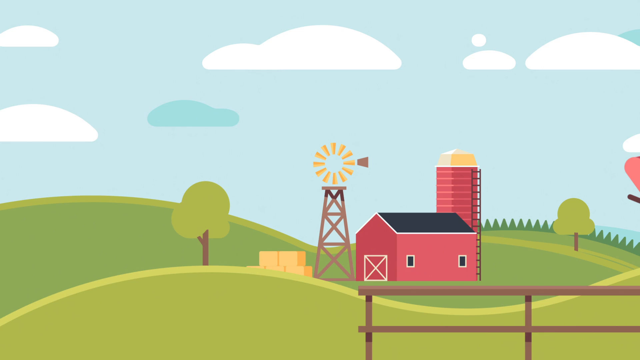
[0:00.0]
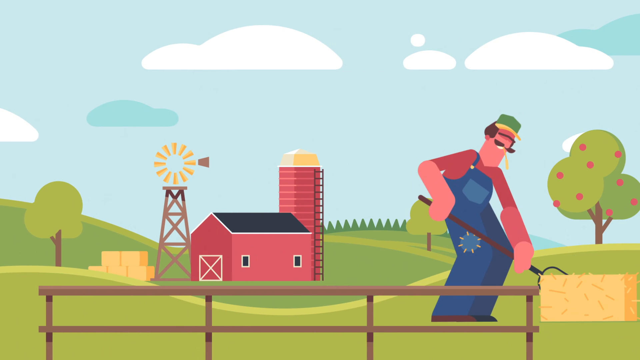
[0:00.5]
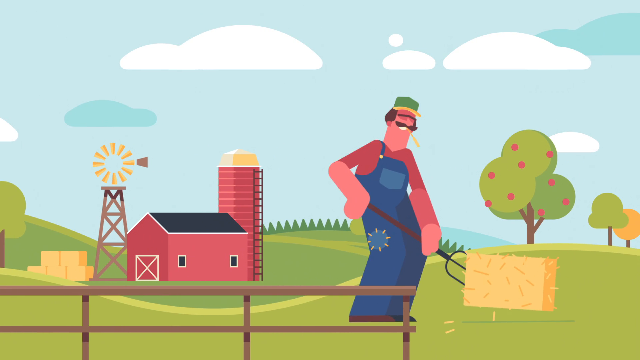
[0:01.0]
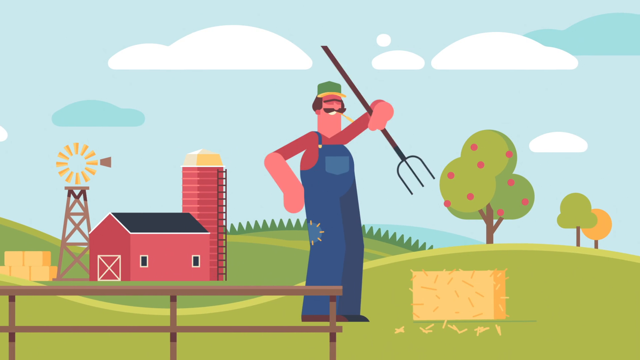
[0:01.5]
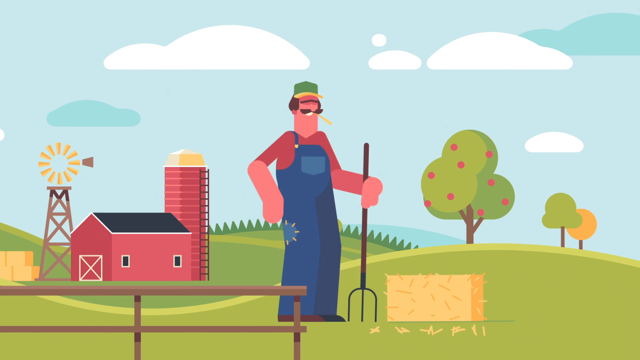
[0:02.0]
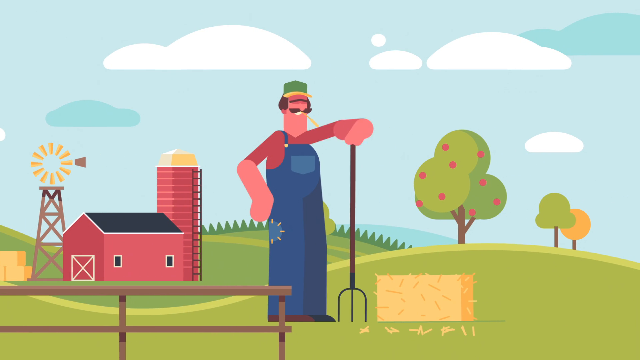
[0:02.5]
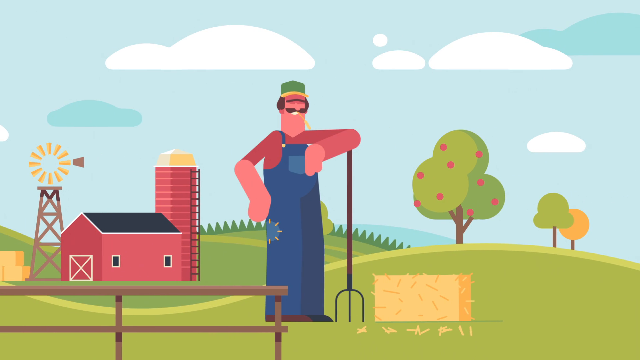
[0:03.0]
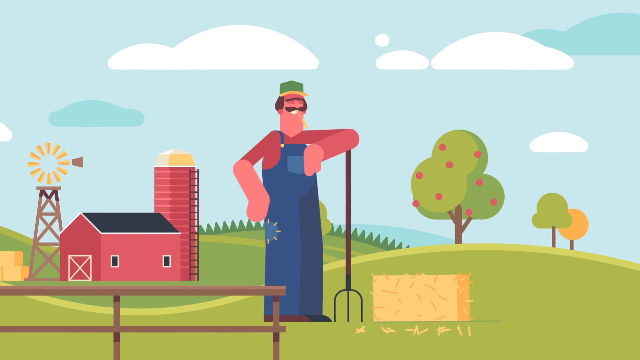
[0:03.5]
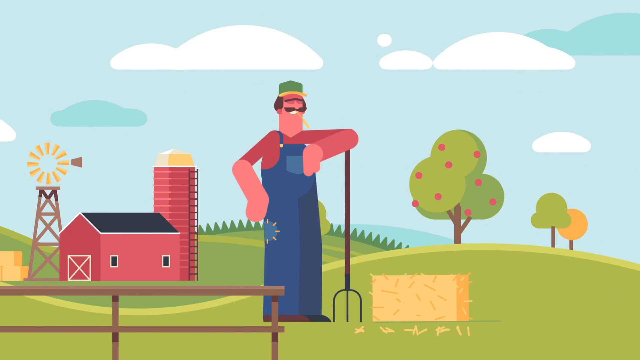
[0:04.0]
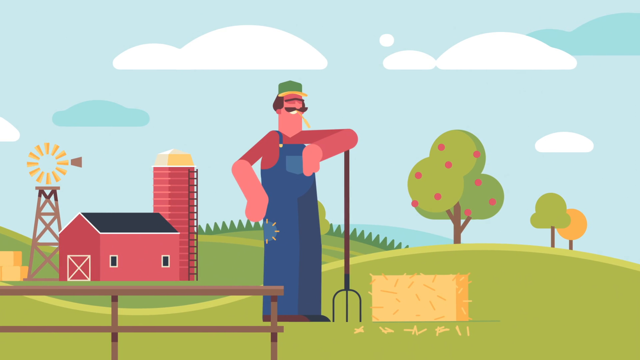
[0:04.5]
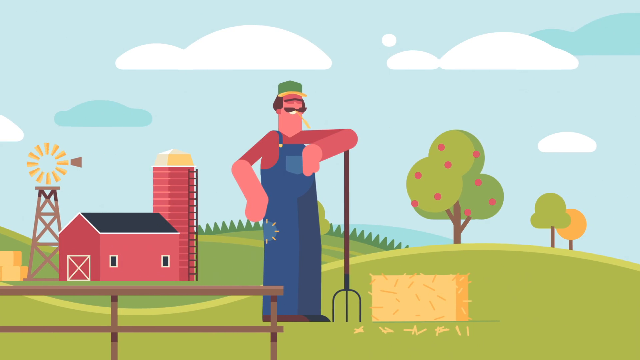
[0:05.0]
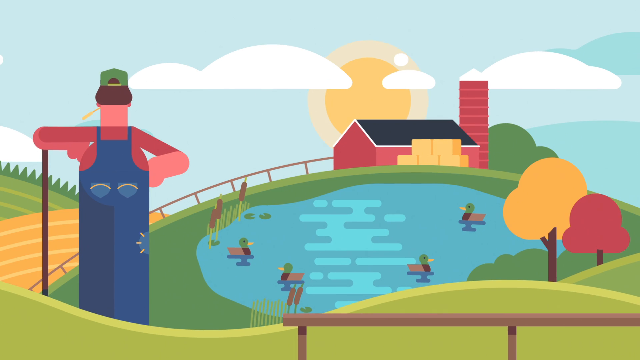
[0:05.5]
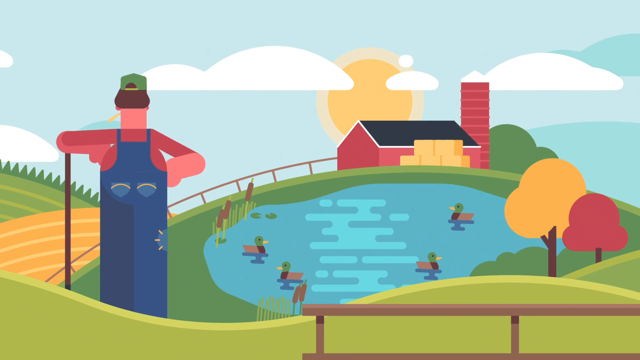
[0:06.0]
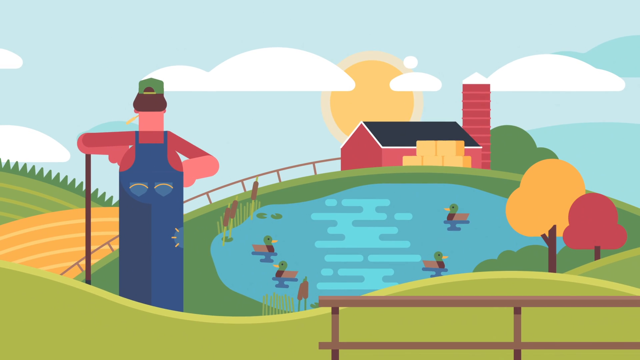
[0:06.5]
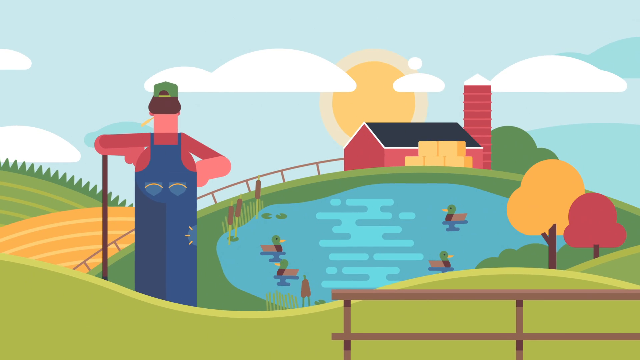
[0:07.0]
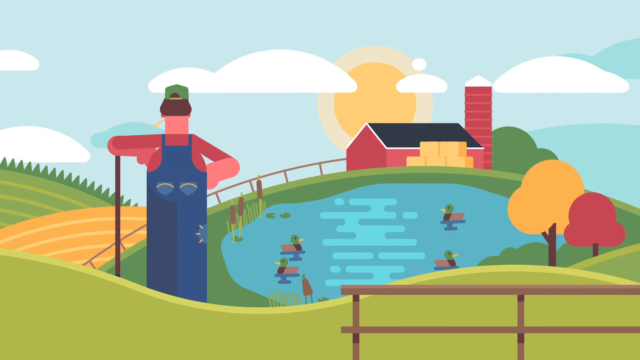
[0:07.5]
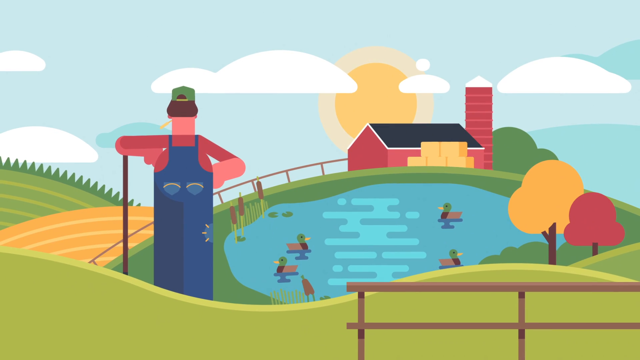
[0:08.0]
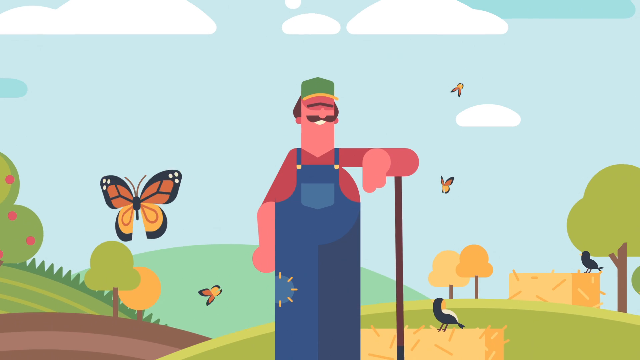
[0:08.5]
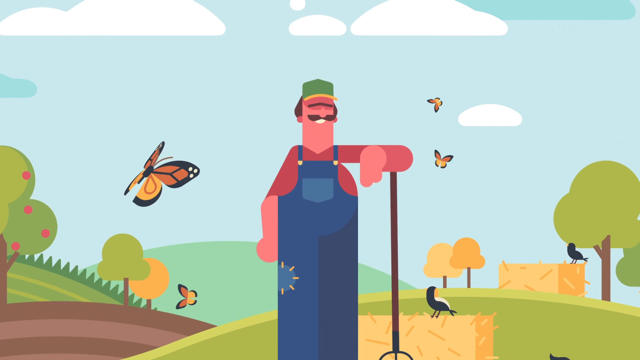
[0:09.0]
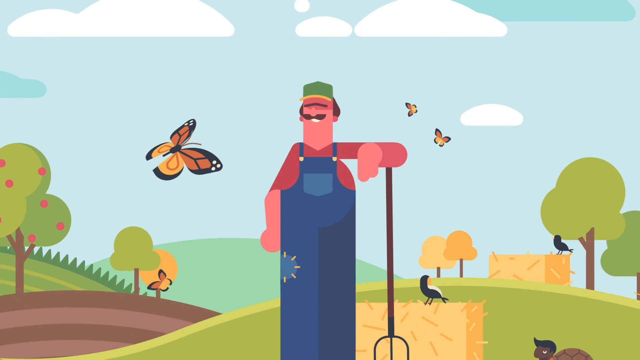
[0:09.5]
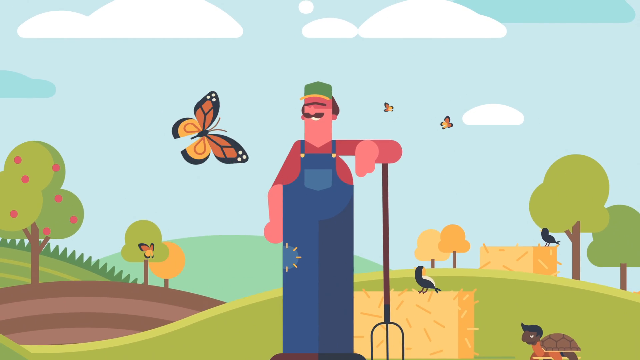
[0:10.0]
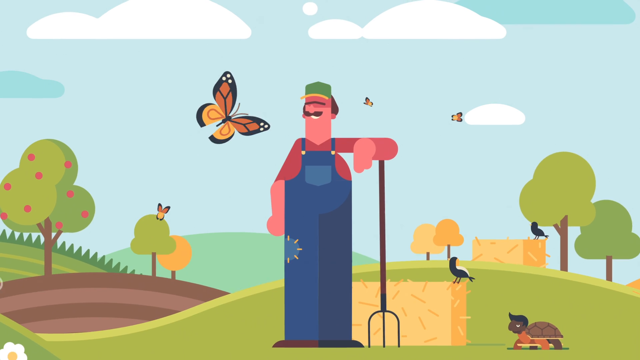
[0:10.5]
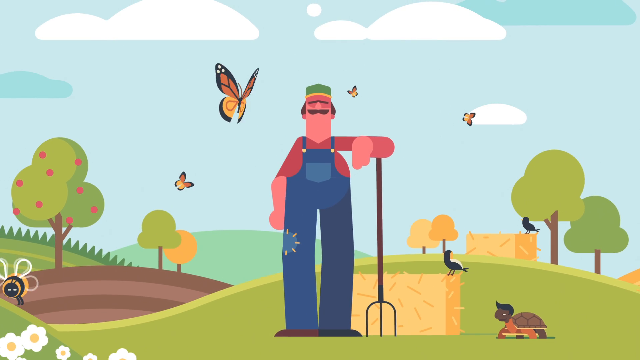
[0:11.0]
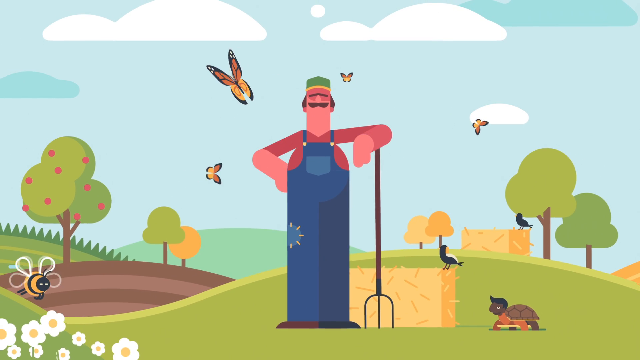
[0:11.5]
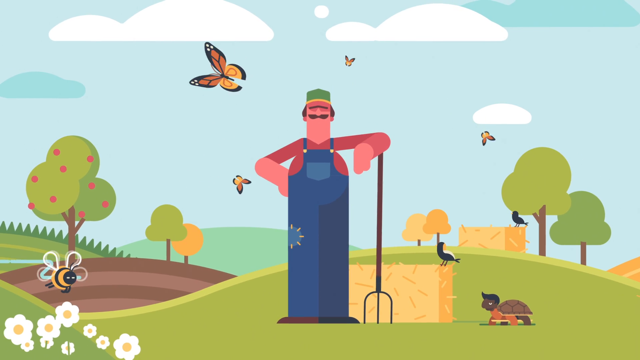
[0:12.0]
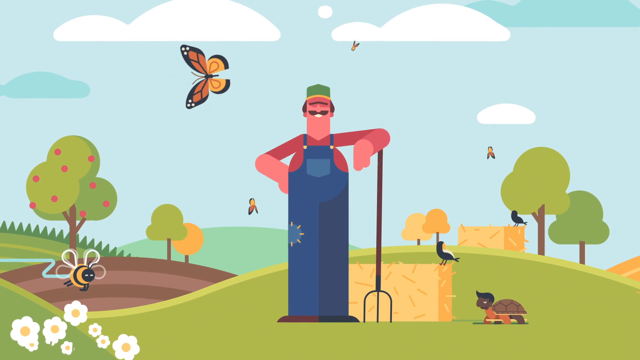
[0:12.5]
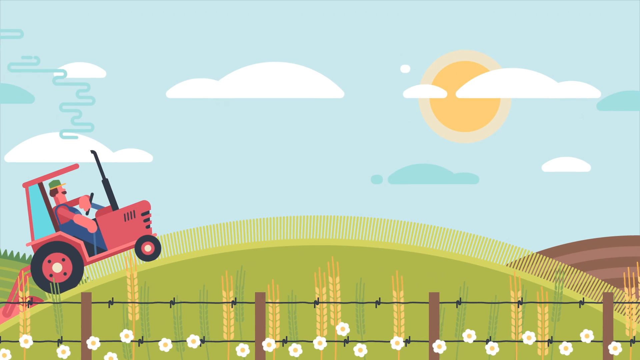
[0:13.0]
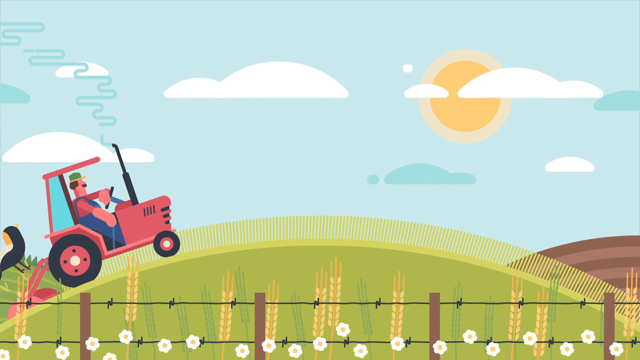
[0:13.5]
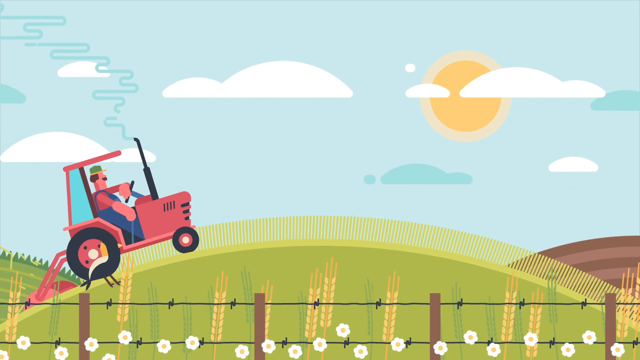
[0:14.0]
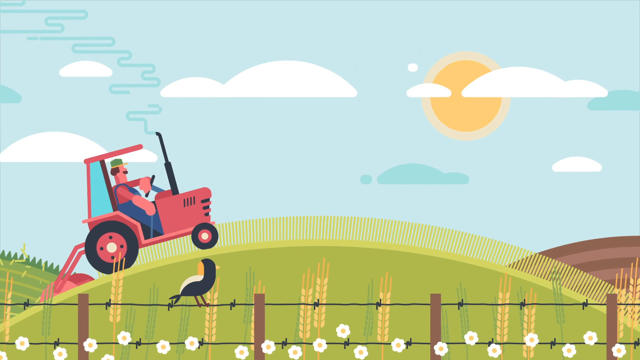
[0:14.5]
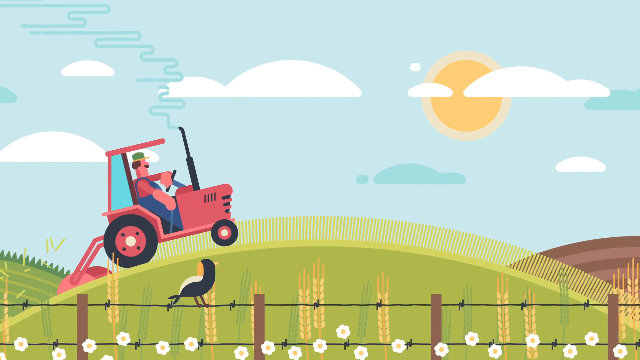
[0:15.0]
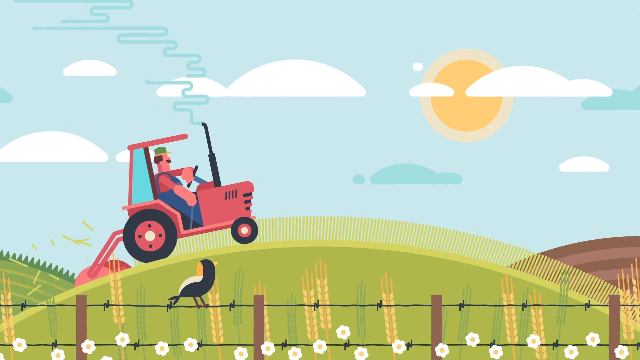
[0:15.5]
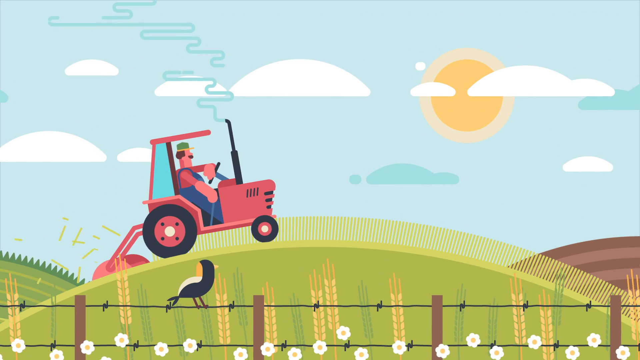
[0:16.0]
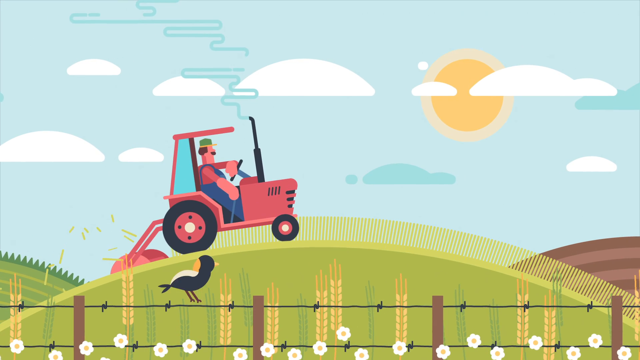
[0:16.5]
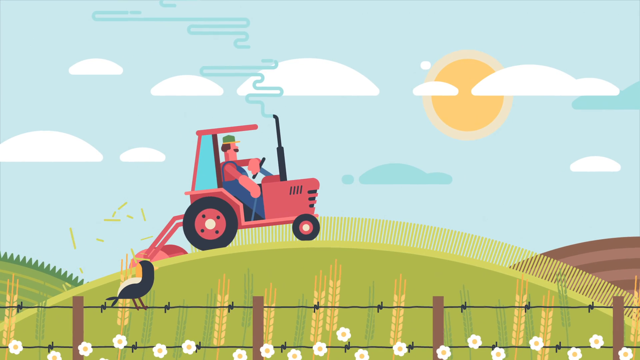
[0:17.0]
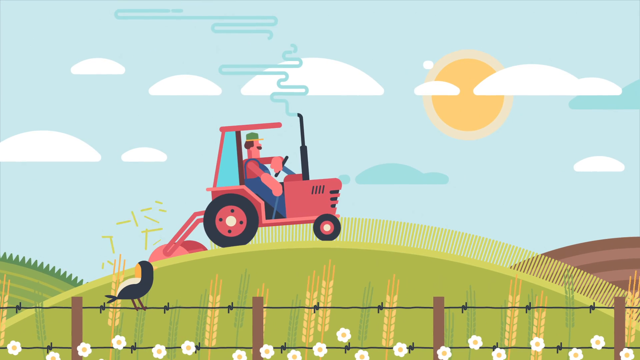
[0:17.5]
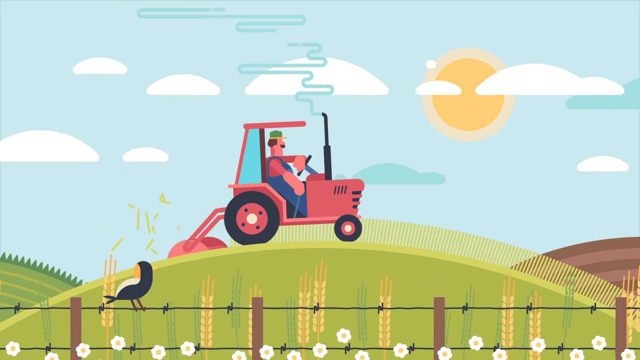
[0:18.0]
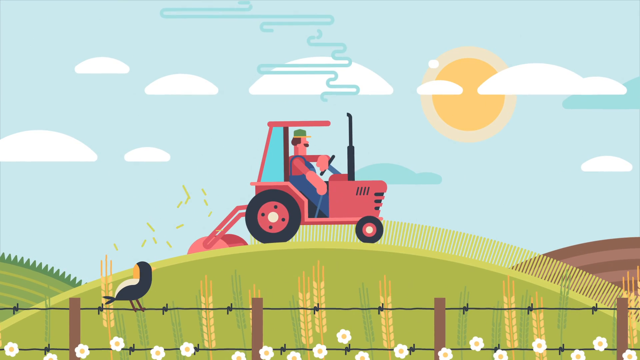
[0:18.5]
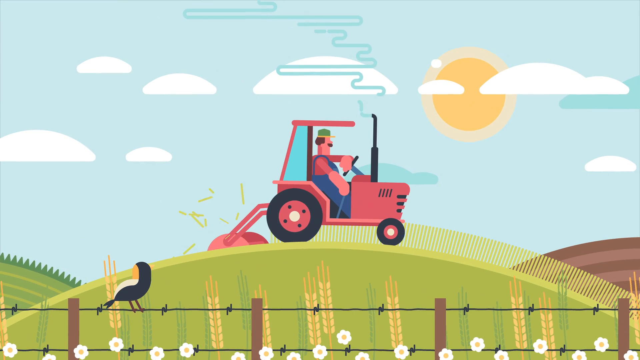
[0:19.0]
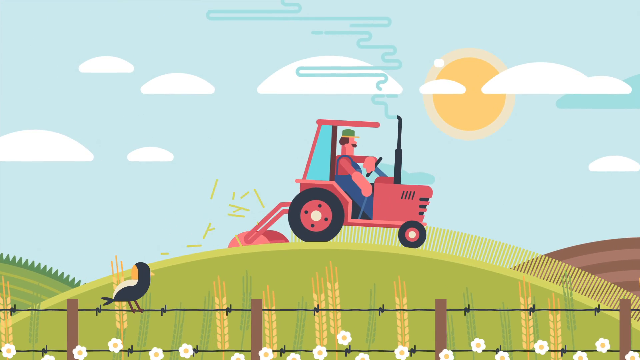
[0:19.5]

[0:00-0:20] The cartoon animation is set on a farm with rolling hills. There are four trees, a barn in the background, and blue and white clouds in the background. A farmer with a piece of hay between his teeth lifts a bale of hay up with his pitchfork, then rests his arm on top of the pitchfork's handle, pleased with himself, nodding his head. In the next scene he stares at the ducks in the pond. Ahead of him, the sun and some clouds are in the background, along with more trees (about three) and another red house with five bales of hay next to it; about five ducks swim in the pond. In the next scene the farmer is still standing next to his bale of hay. There is a turtle, two birds, and four butterflies flying around him, and he looks over at one that is near him. A few more trees, about six or seven, are in this scene. Then the farmer mows the lawn with his red tractor, driving it over a hill. A barbed wire fence with a bird perched on top is in the foreground, the sun is in the background, and a dirt hill is on the right of the screen.